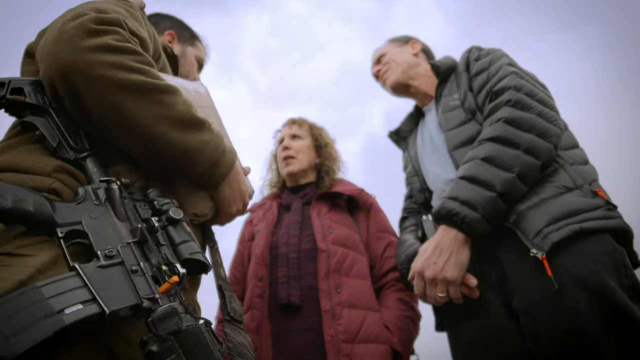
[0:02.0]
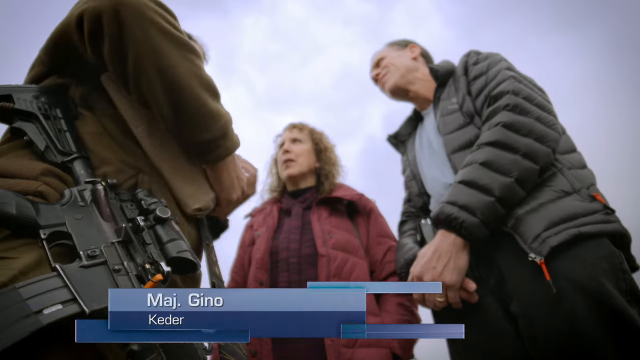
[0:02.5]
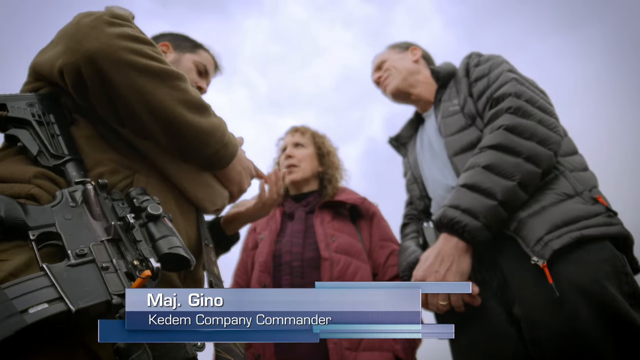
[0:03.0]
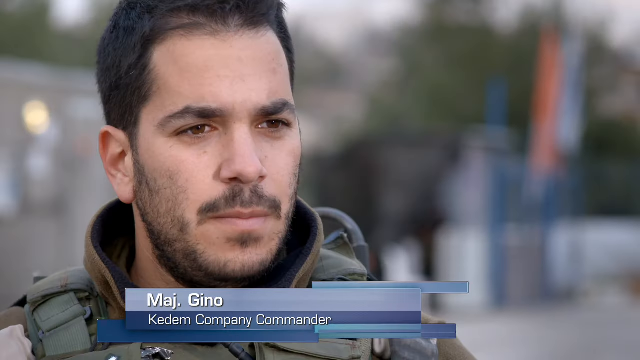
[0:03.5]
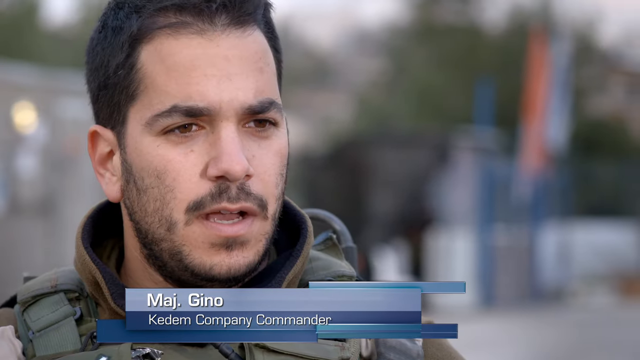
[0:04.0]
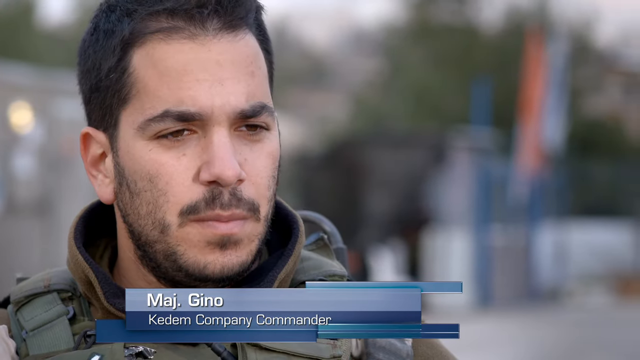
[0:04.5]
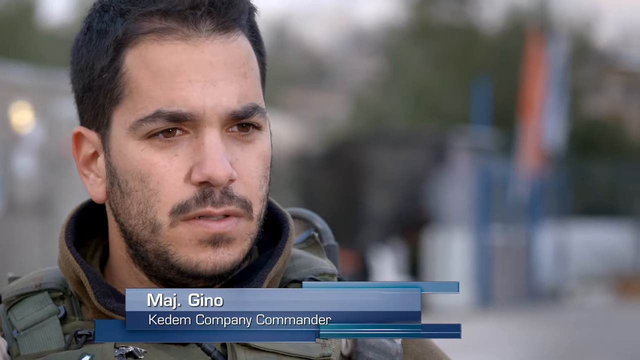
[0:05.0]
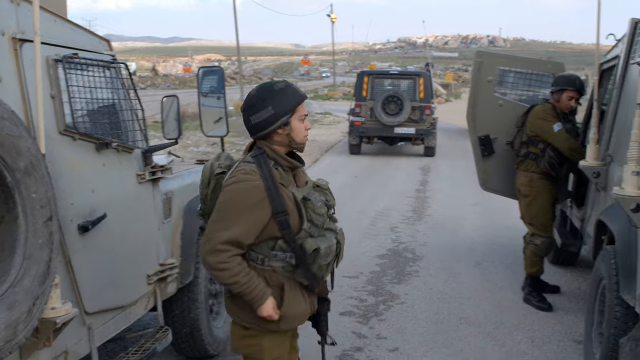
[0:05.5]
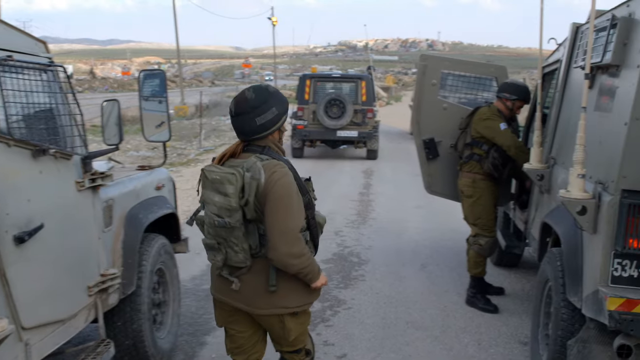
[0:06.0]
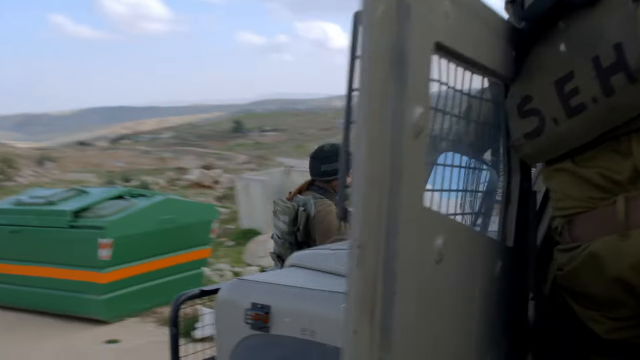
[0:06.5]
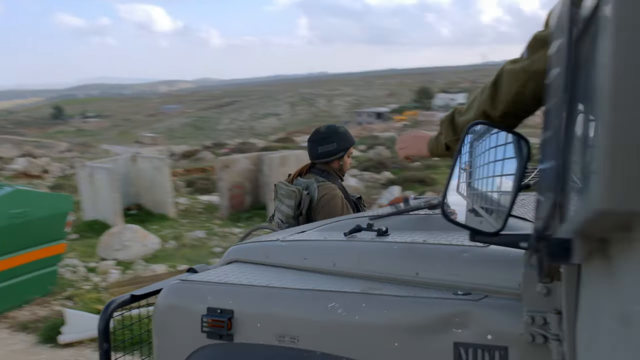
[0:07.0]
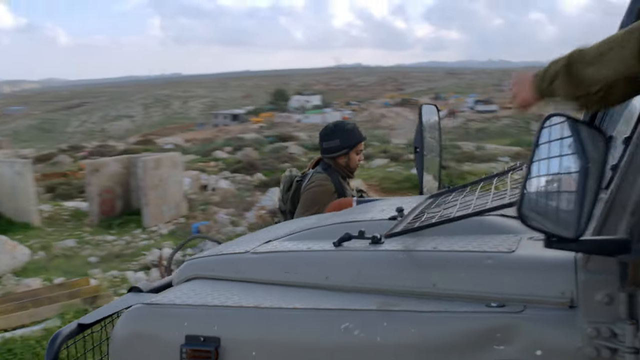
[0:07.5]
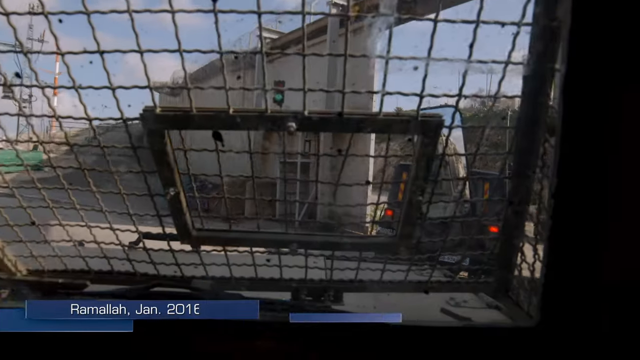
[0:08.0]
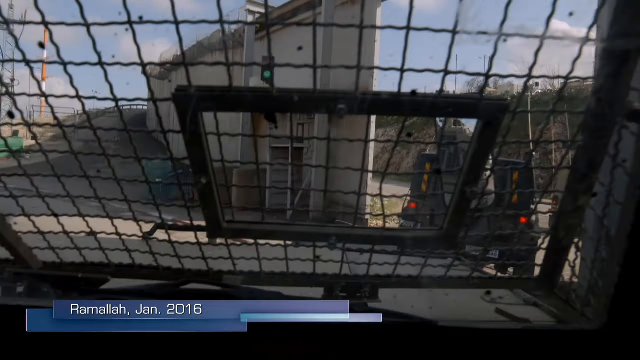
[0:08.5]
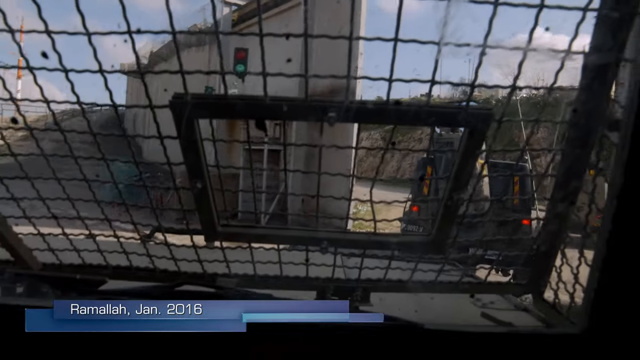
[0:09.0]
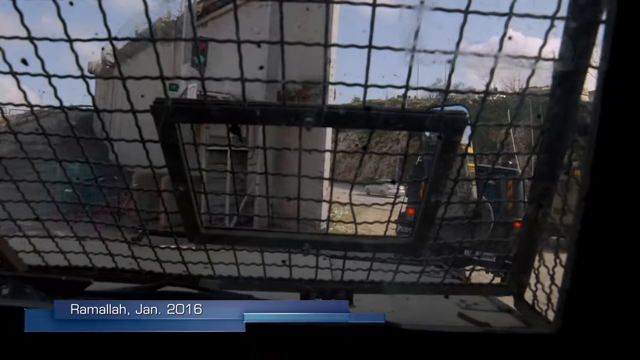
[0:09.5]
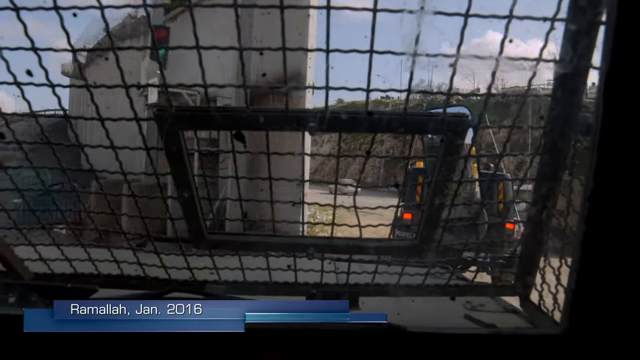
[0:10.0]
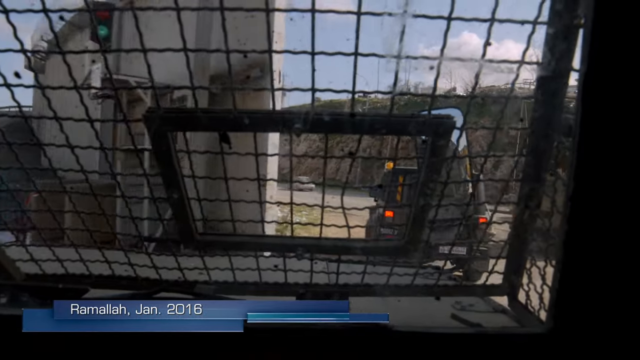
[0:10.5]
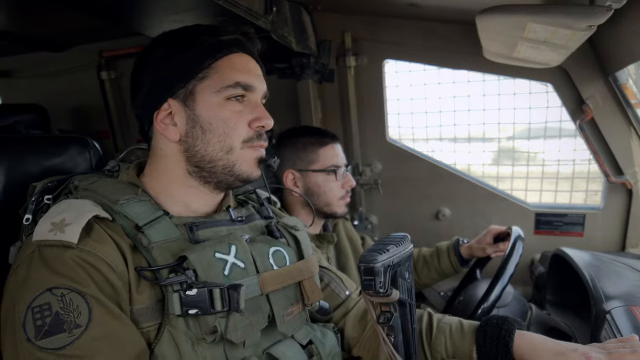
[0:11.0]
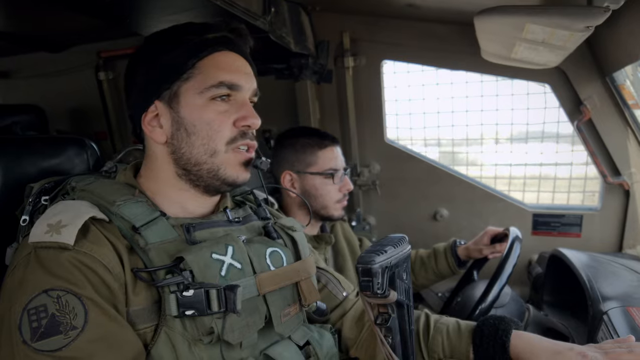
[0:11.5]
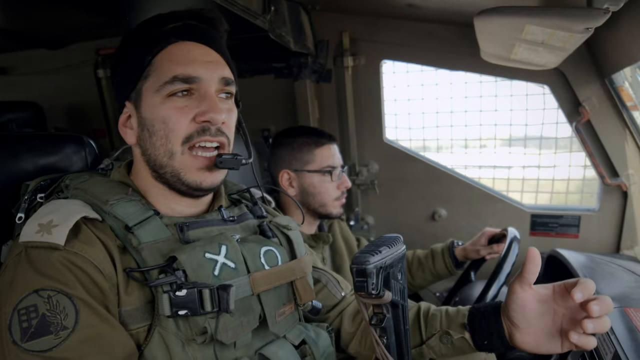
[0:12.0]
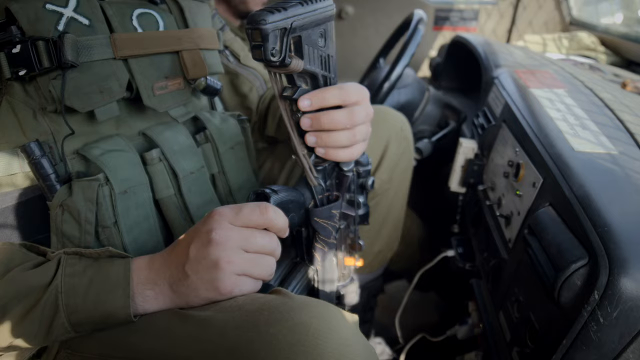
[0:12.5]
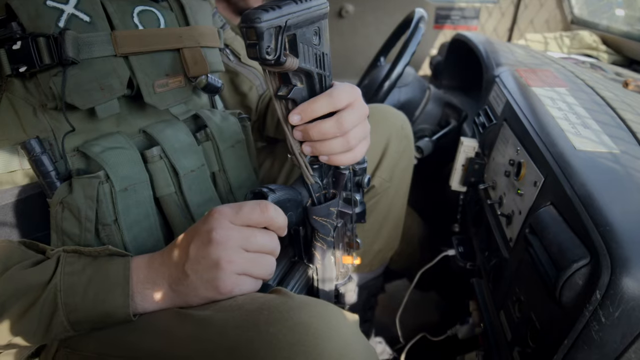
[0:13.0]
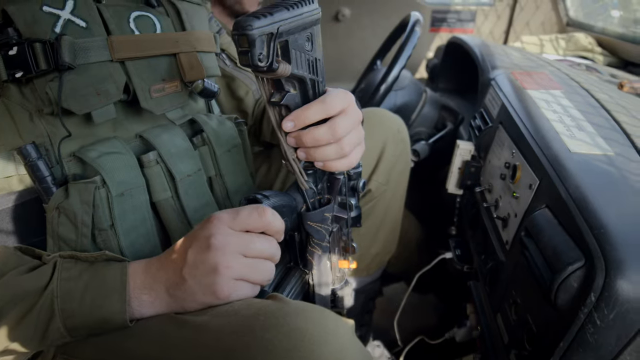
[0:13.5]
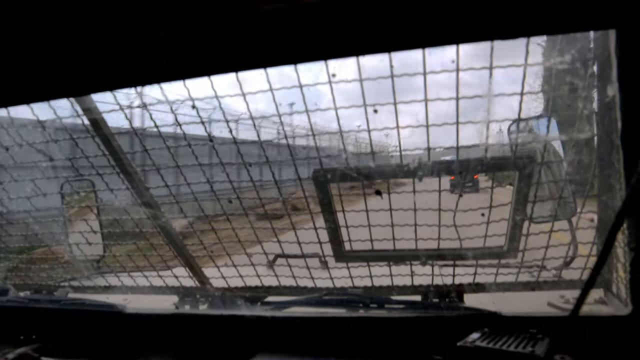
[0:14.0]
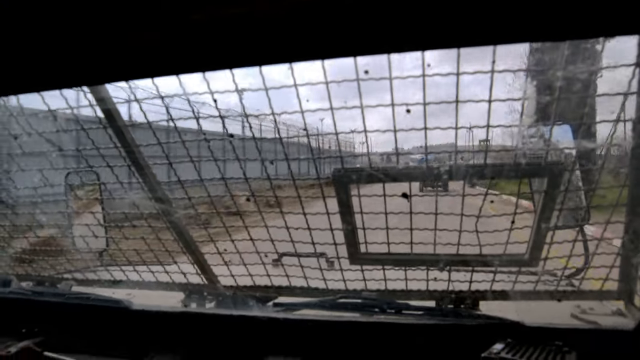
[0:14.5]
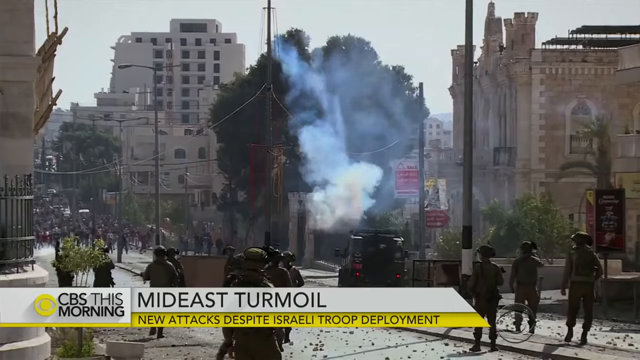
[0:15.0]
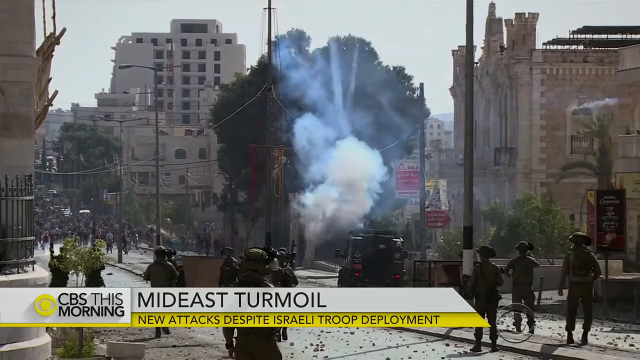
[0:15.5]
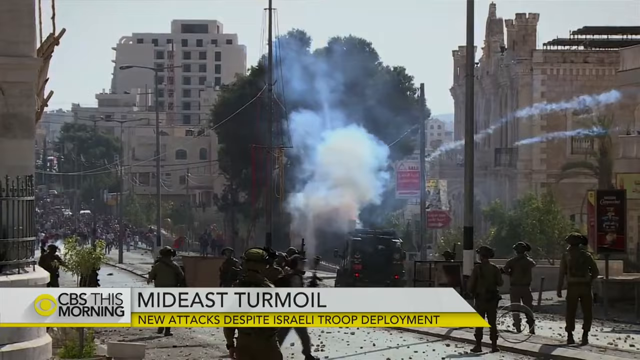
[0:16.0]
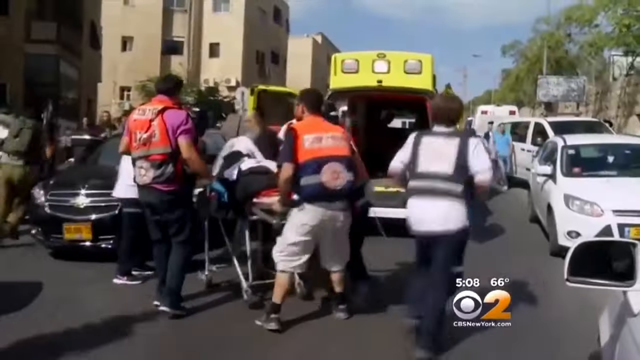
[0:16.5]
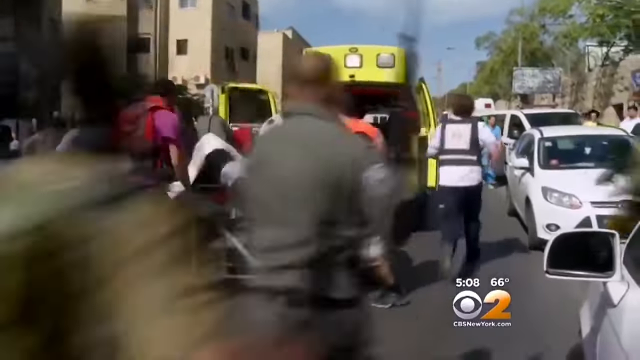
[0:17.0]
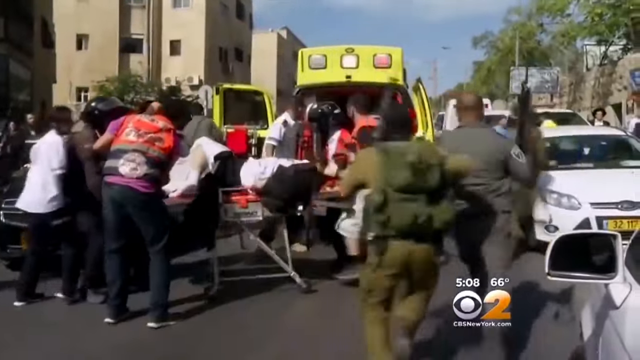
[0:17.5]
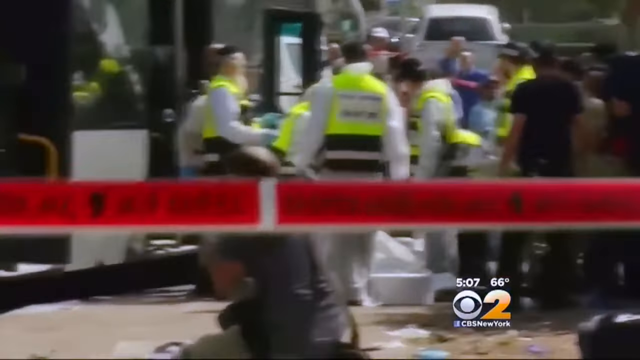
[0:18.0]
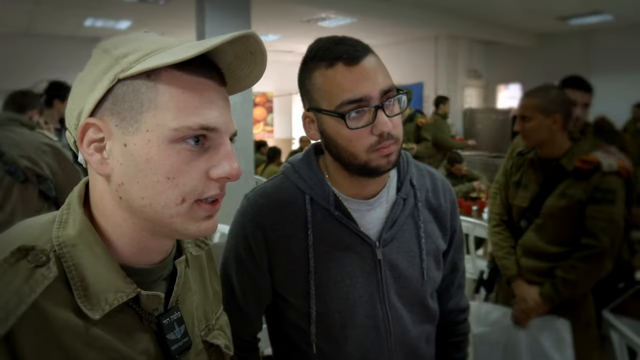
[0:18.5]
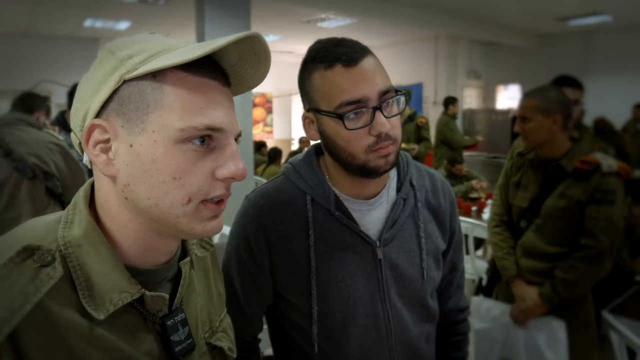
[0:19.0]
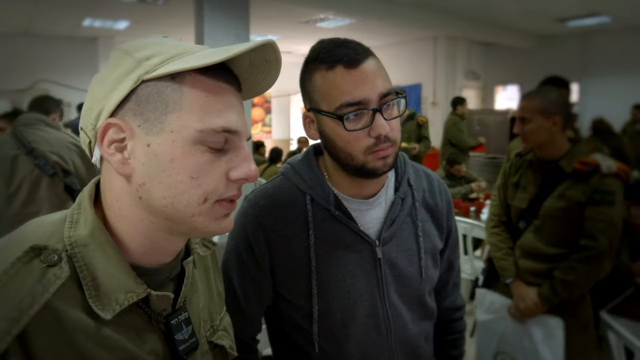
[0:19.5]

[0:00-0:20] After a black screen, the camera is angled kind of upward at three Caucasian people. On the left is a man in a brown shirt with a gun on his hip, like a big machine gun. Next is a woman who looks to have blondish hair, wearing a red coat over a maroon shirt, and on the right is a man in a gray t-shirt and a black puffer coat. They stand kind of in a circle, talking to each other. Next, a man with short-cropped dark hair, stubble on his chin and a beard speaks to the camera; a subtitle underneath his face reads "Major Gino" and, below that, "Kadeem Company Commander." A street follows with several military personnel and military jeeps, with personnel walking around. The camera moves around a military jeep and then is inside the jeep, driving along as Major Gino speaks to the camera, with the camera looking outward at something like a cage as it drives. Smoke rises from a building with the text "Mid-East in turmoil." The scene switches to two people standing side by side: a Caucasian Army man in fatigues next to a Middle Eastern man wearing black-rimmed glasses and a blue zip-up hoodie.